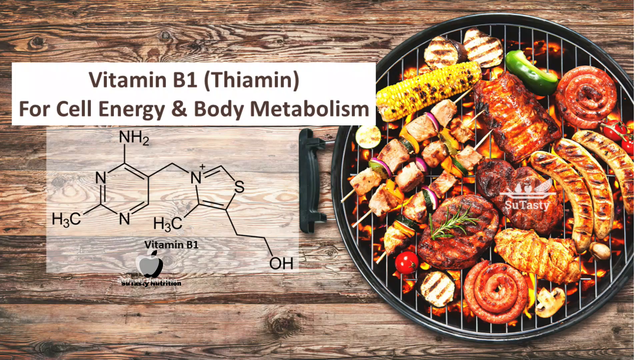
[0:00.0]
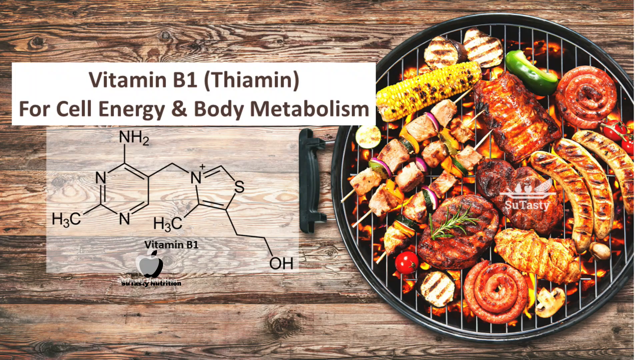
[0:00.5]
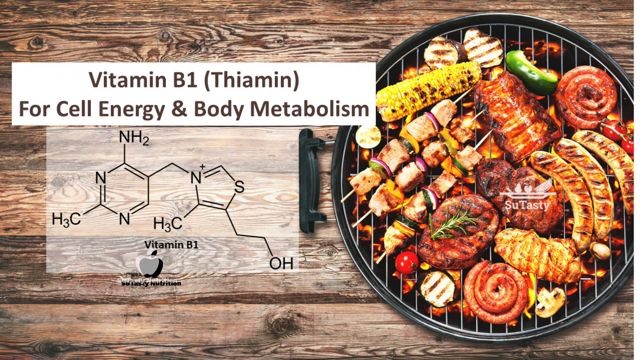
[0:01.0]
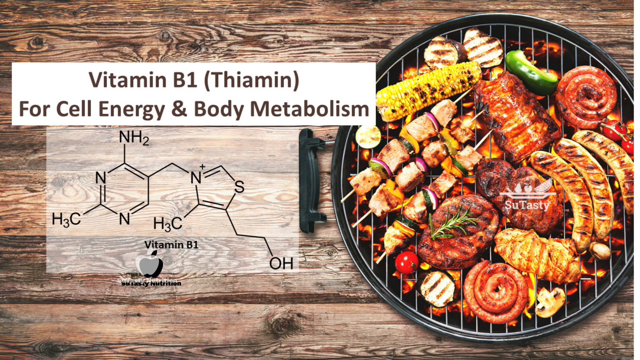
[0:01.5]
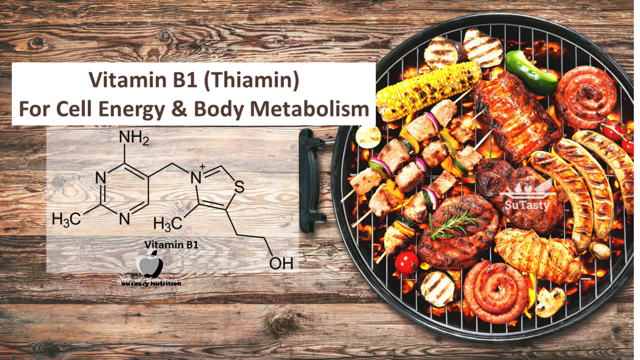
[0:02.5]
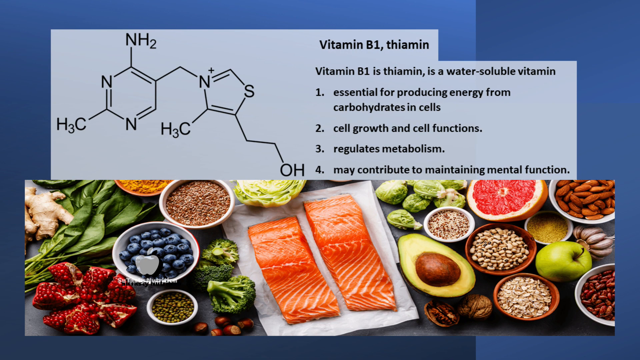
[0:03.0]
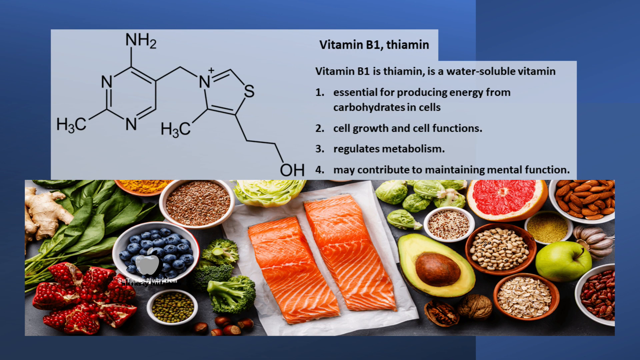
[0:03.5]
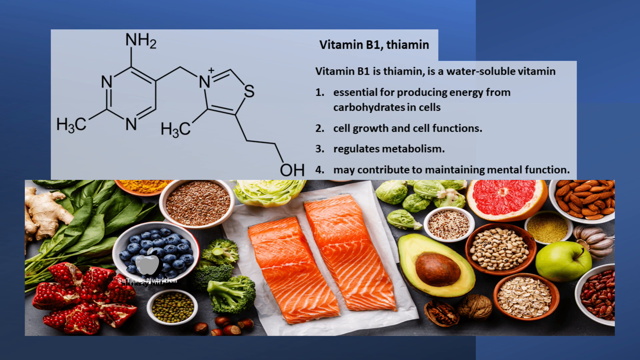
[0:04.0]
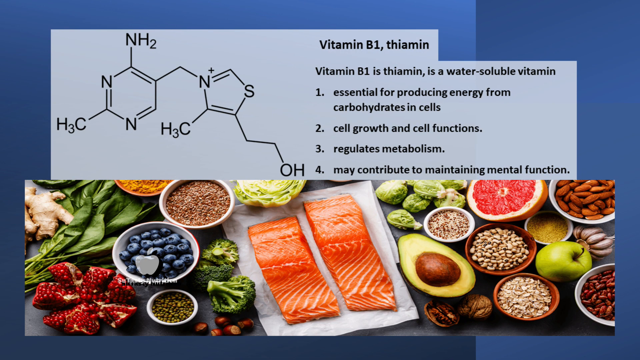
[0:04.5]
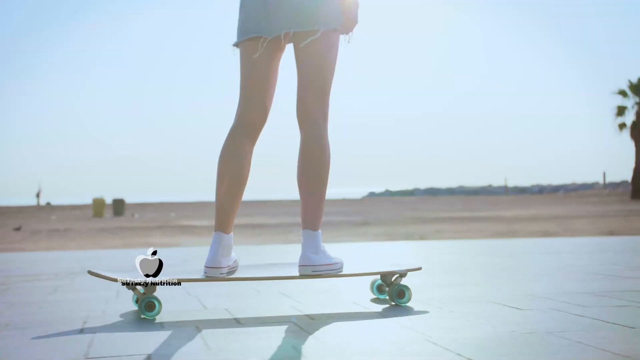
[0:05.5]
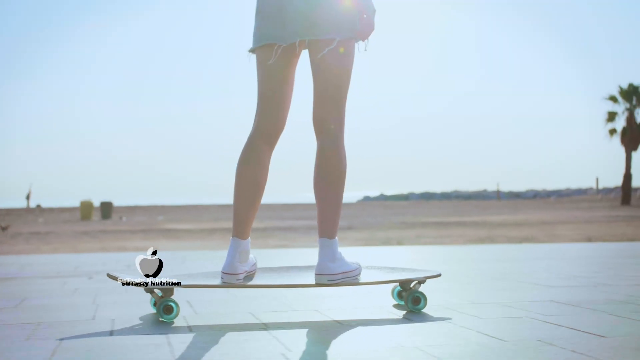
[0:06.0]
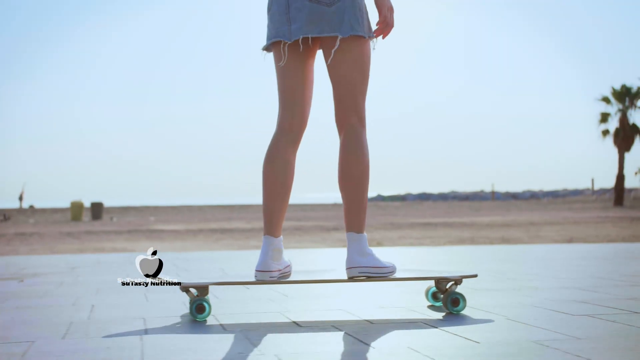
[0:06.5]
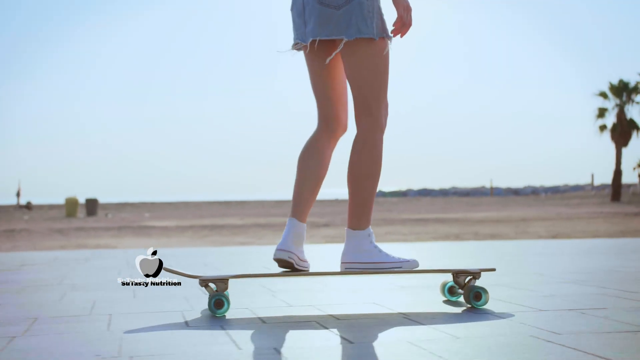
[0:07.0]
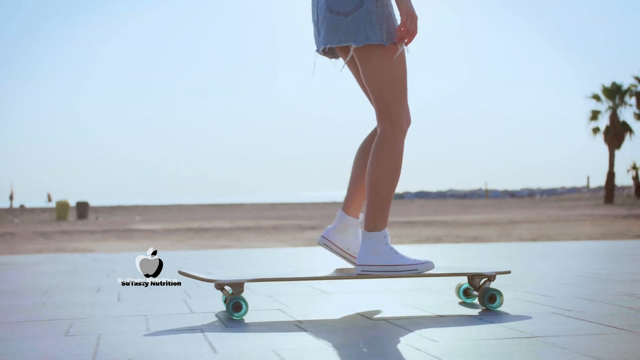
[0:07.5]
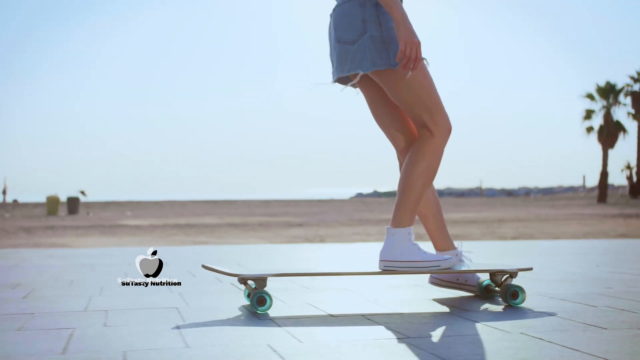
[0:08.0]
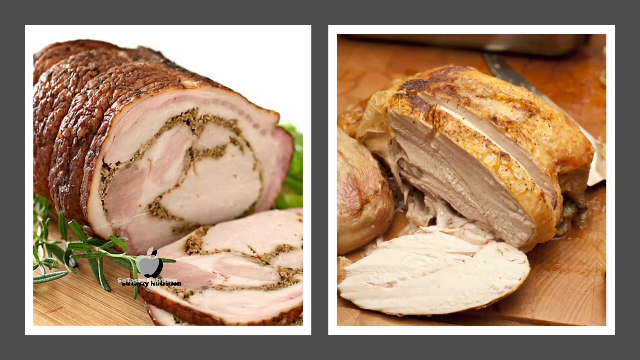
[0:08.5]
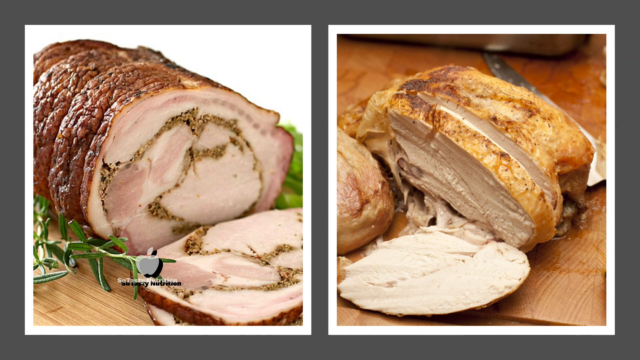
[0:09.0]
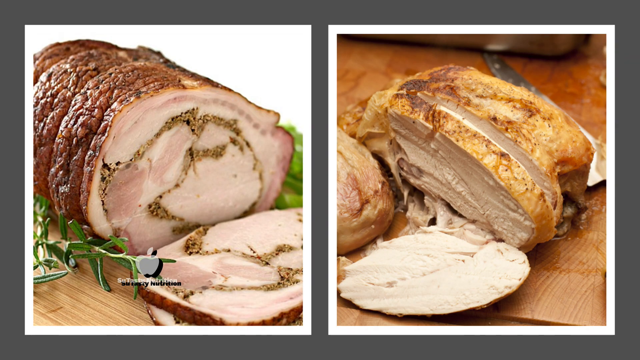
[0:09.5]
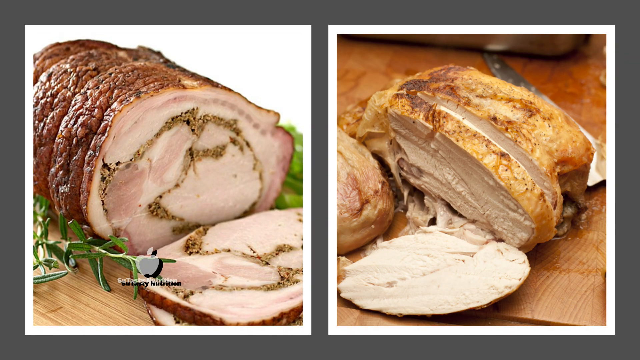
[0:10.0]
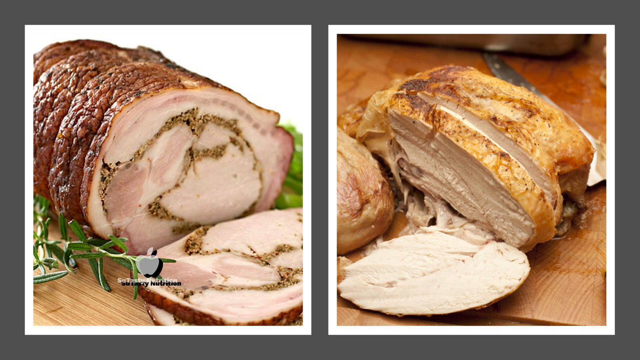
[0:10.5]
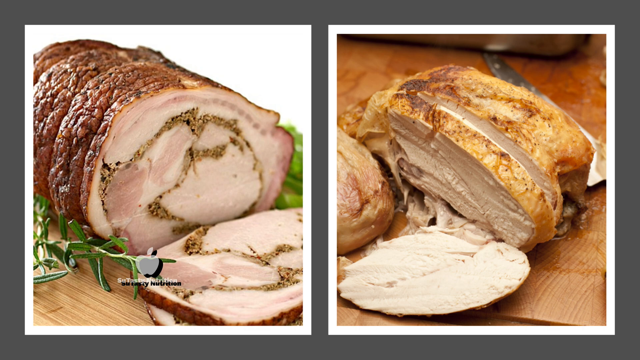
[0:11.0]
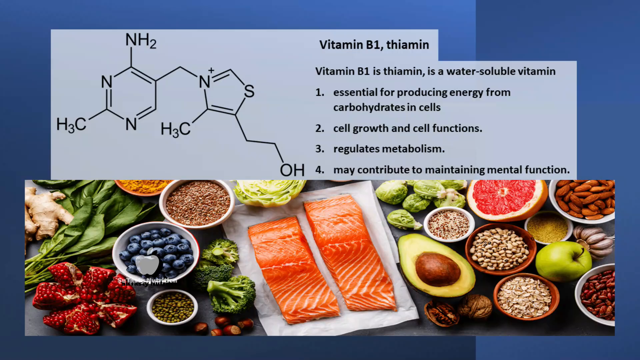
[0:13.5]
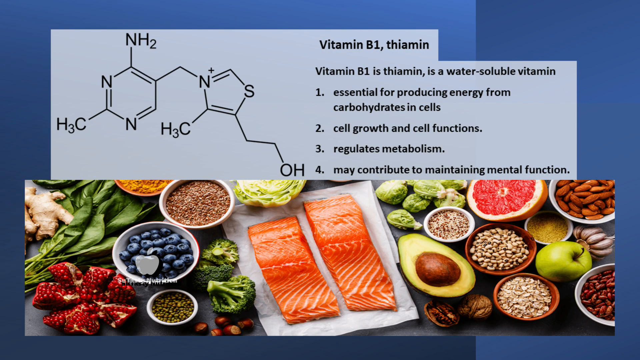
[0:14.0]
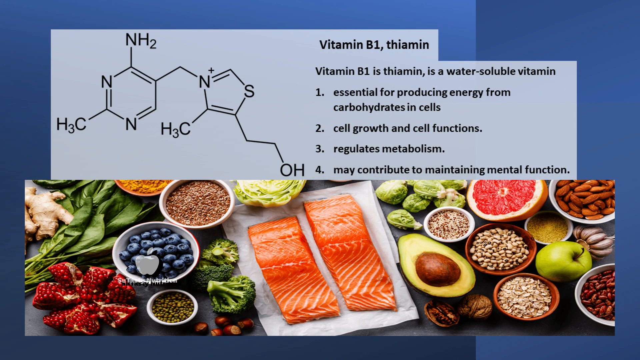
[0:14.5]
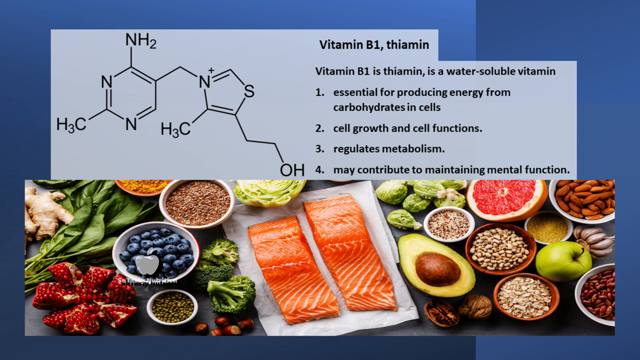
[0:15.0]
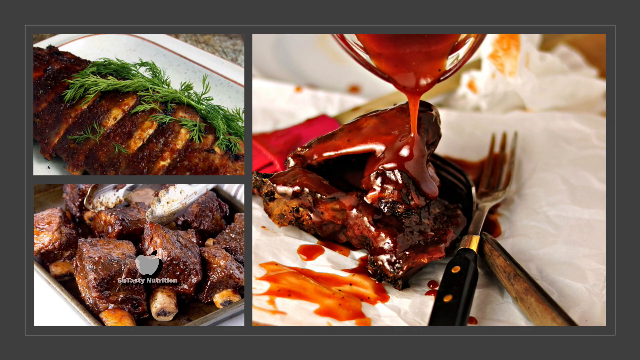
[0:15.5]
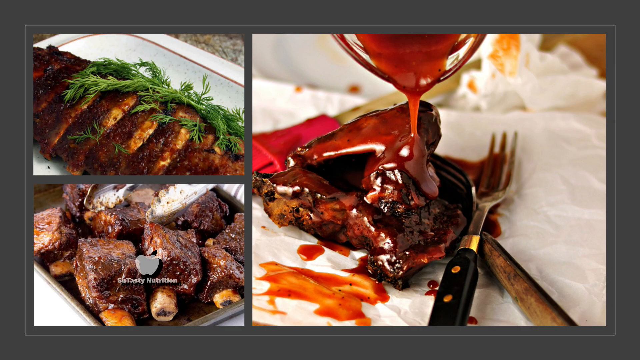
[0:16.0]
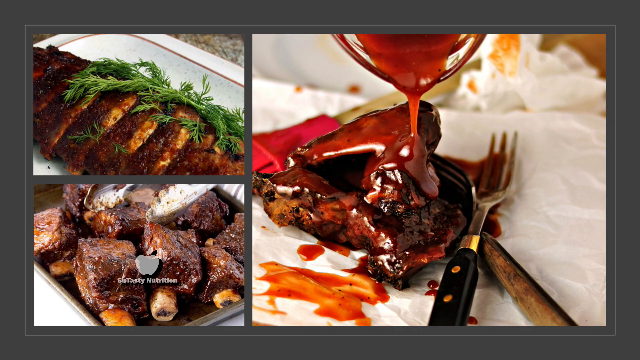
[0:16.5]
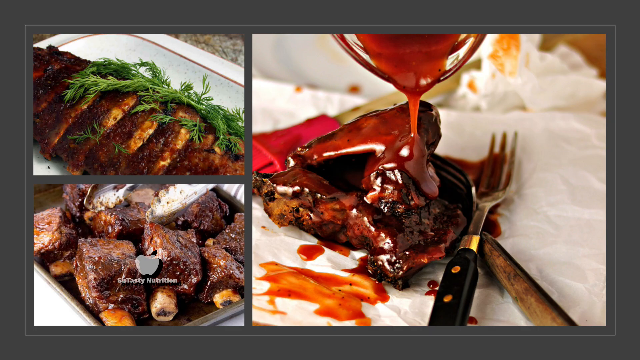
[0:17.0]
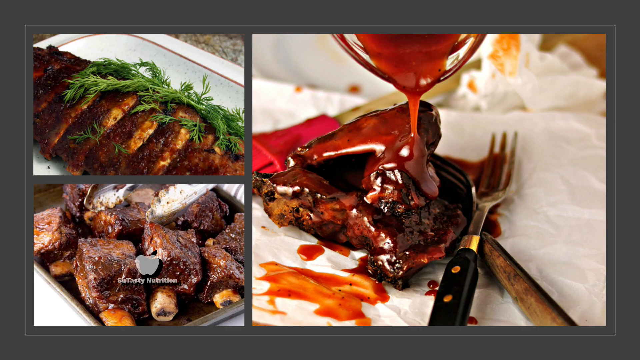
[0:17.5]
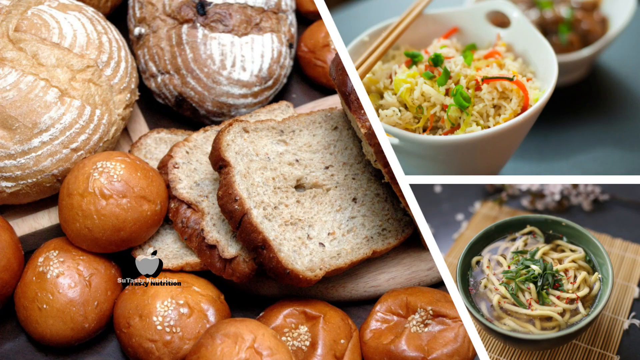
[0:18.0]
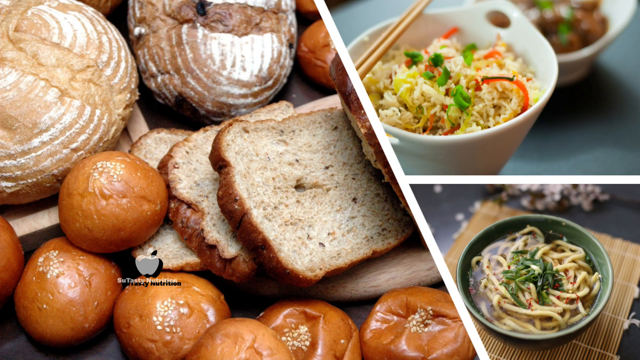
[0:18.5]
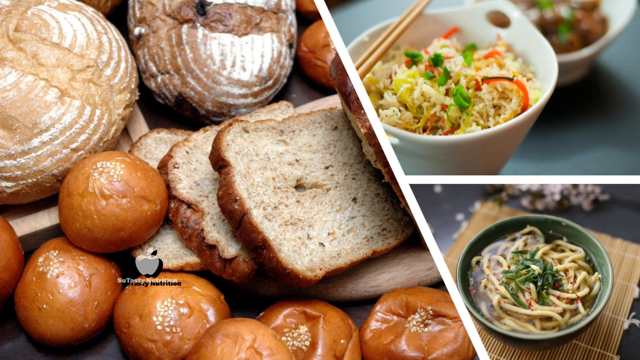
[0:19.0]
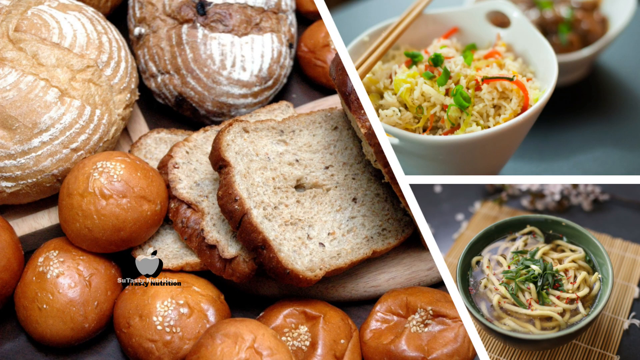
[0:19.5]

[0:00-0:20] The video opens on a grill top holding a variety of foods, meats and vegetables: three sausages, three kebabs, corn, peppers and chicken breast. A cell diagram appears with text reading "vitamin B1 for cell energy and body metabolism." A different cell diagram follows, still about vitamin B1, with a variety of foods displayed below this new chart: salmon, avocado, fruits, nuts, blueberries, some broccoli, brussel sprouts and citrus fruits. Next, a child, likely a girl, wearing a skirt and Converse tennis shoes skateboards on a skateboard in front of a beach. A picture of some sort of stuffed roast or pork loin is then on display. Following the skateboarding slide, further slides picture other foods: bread, meats, roast, pork, ribs, breads and noodles.